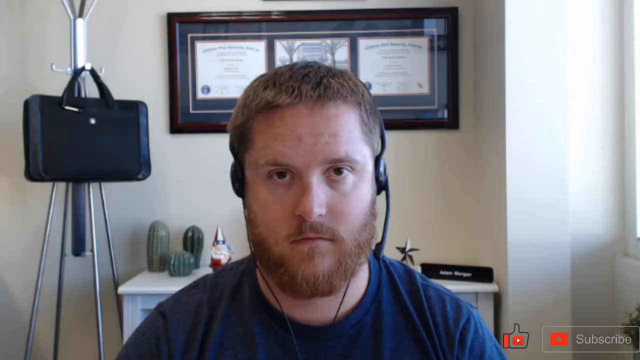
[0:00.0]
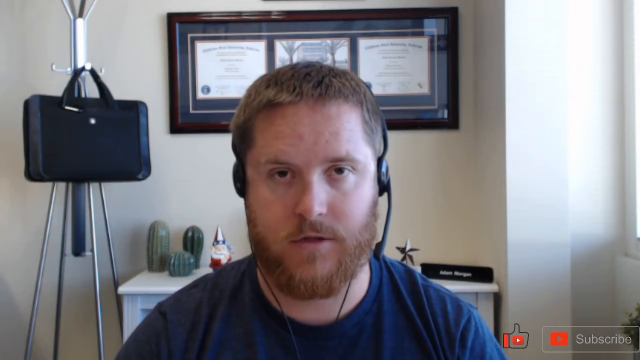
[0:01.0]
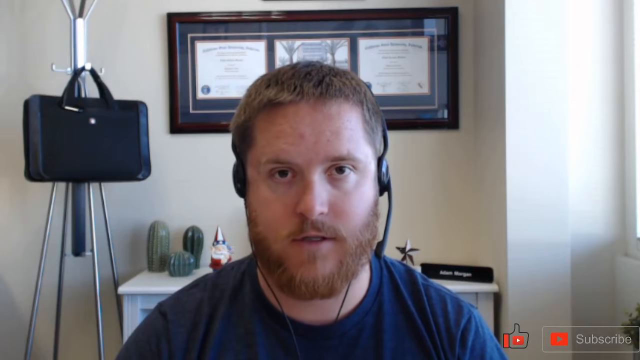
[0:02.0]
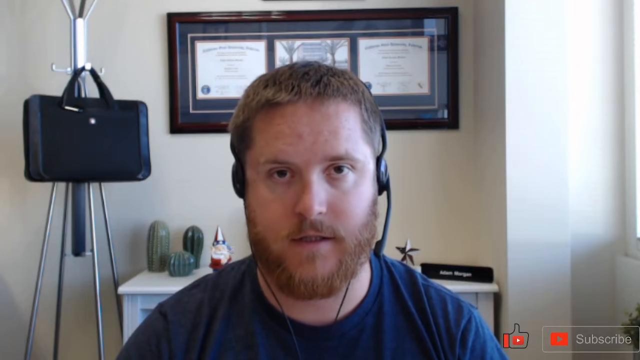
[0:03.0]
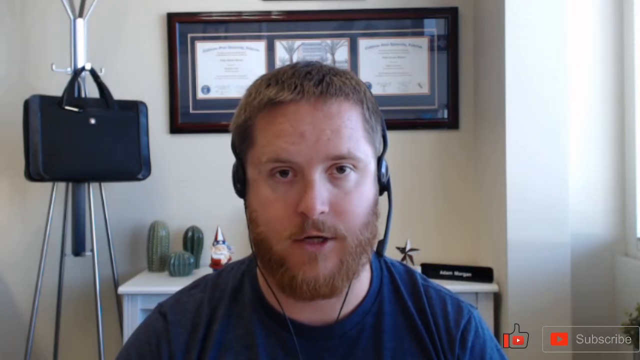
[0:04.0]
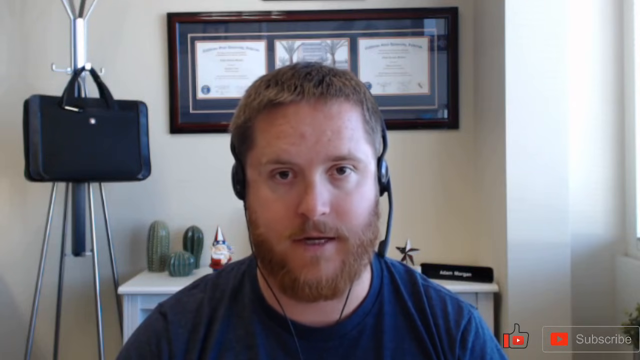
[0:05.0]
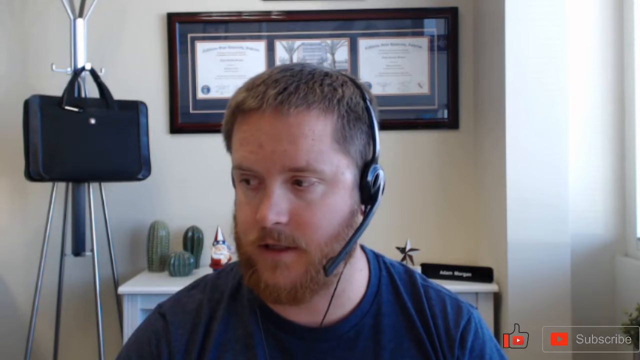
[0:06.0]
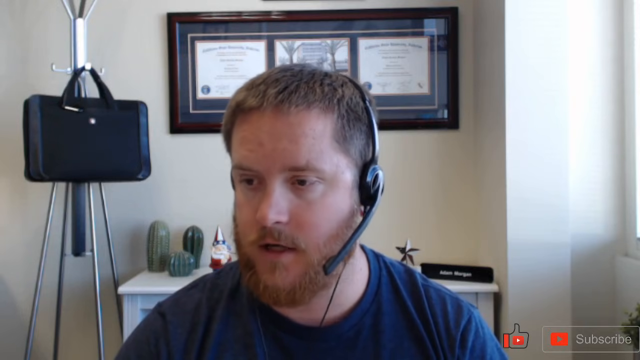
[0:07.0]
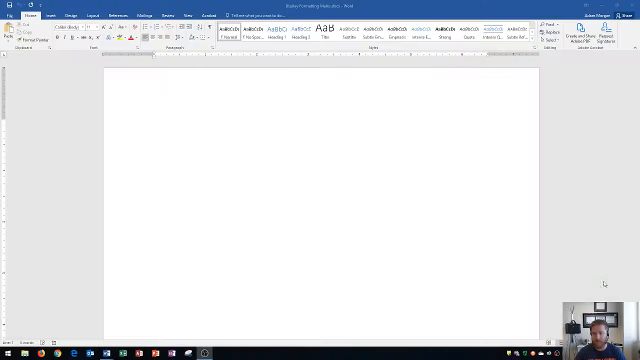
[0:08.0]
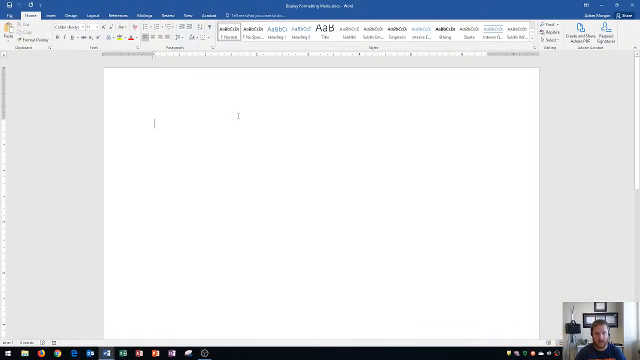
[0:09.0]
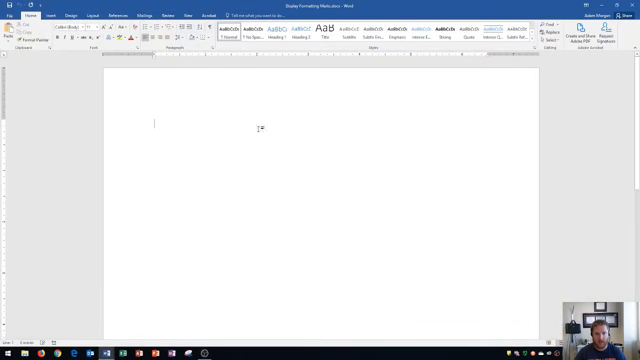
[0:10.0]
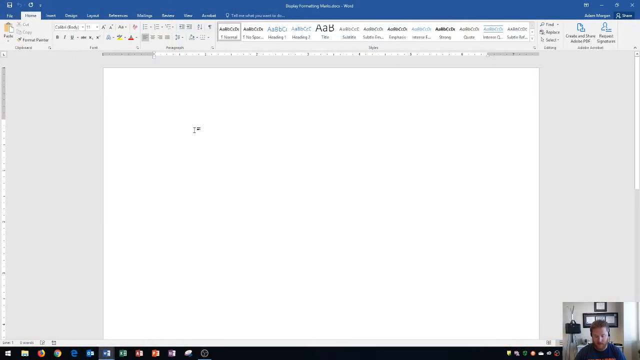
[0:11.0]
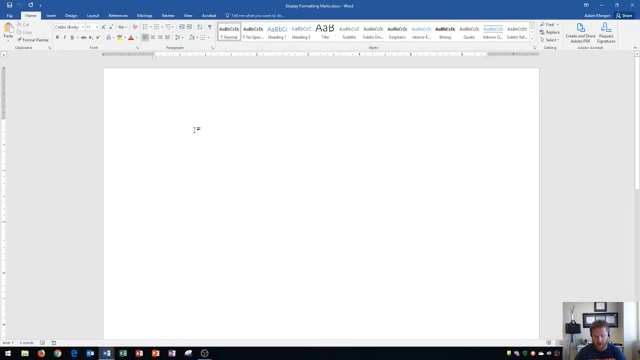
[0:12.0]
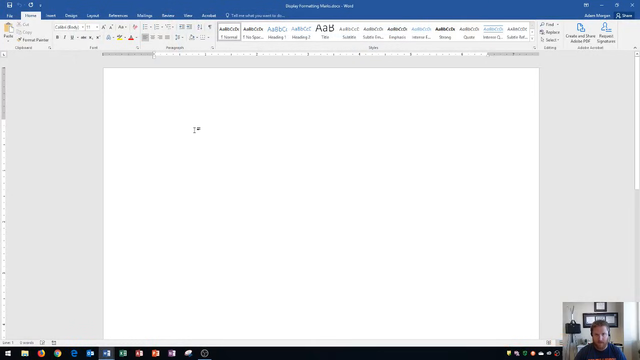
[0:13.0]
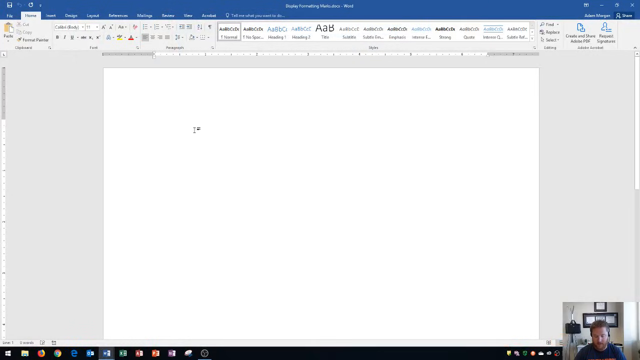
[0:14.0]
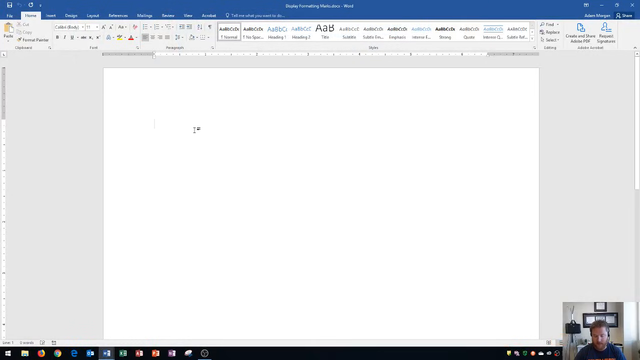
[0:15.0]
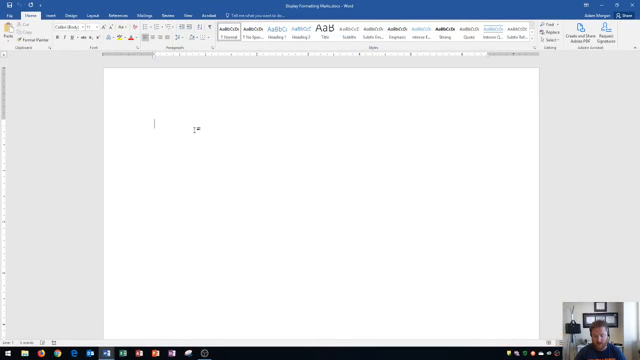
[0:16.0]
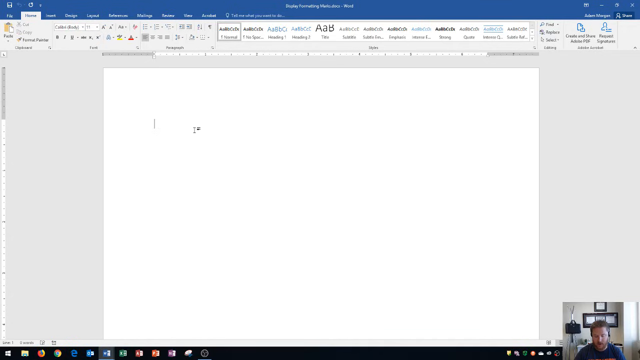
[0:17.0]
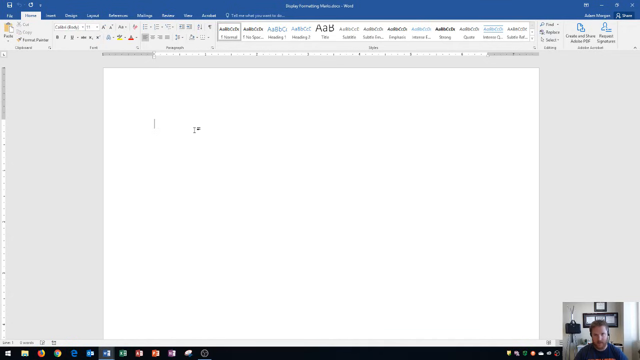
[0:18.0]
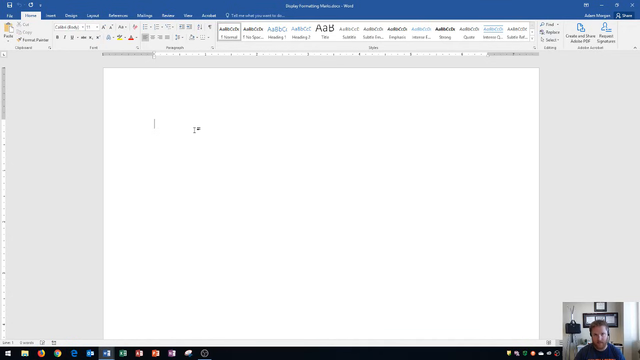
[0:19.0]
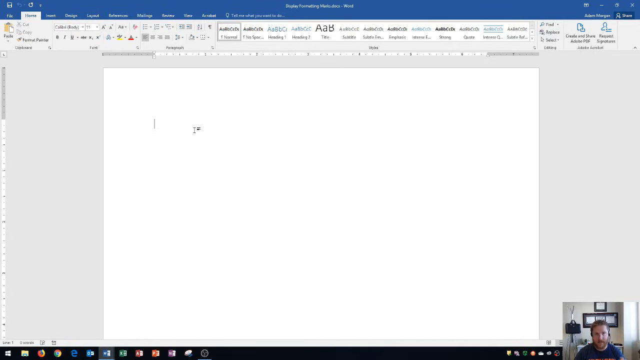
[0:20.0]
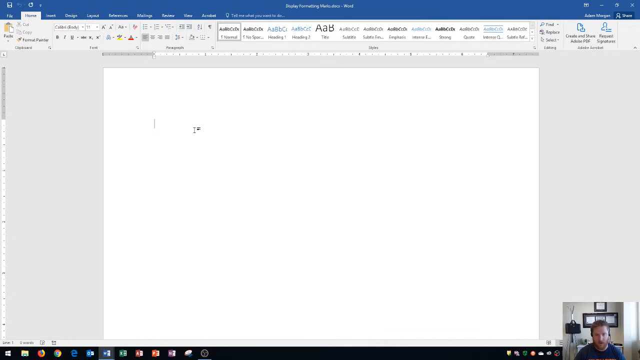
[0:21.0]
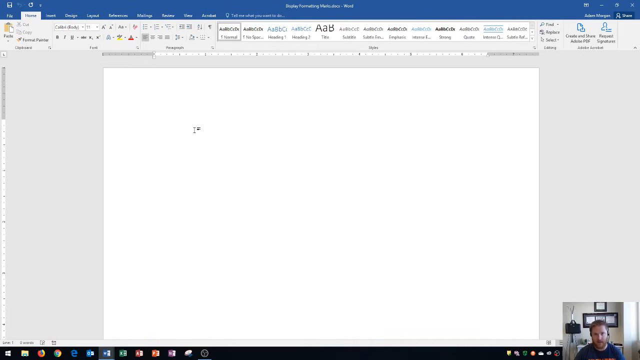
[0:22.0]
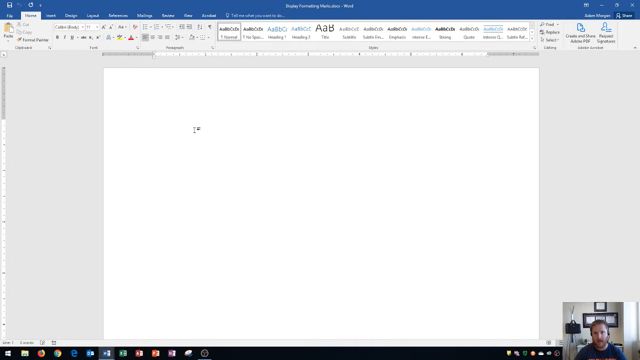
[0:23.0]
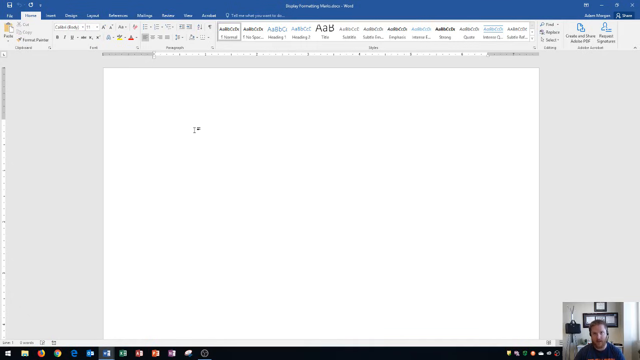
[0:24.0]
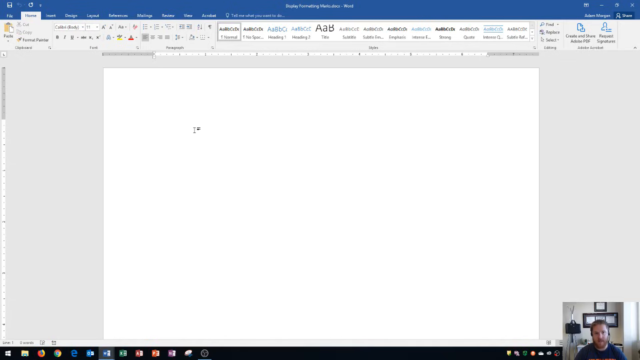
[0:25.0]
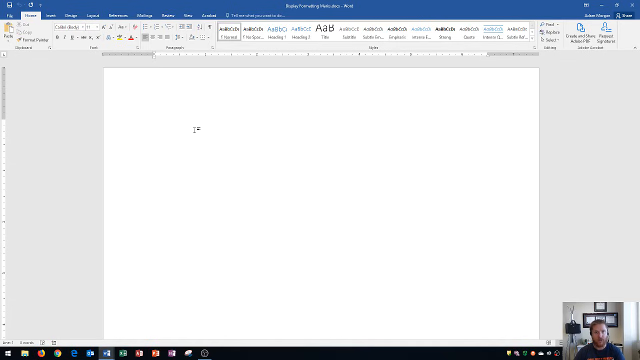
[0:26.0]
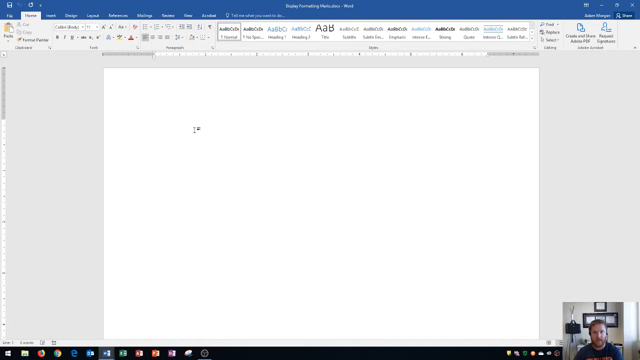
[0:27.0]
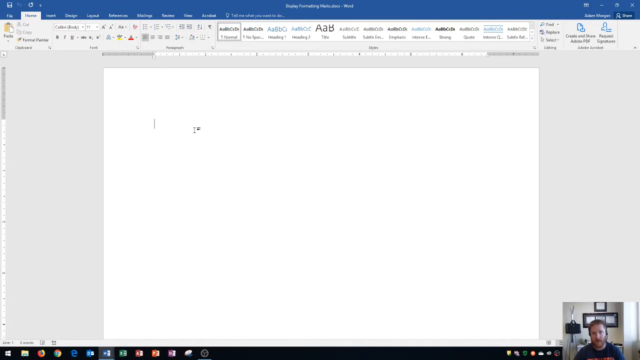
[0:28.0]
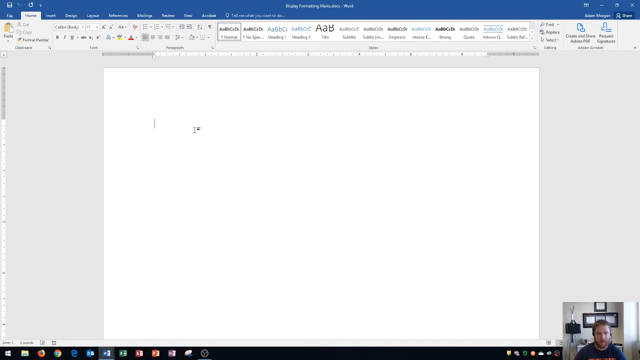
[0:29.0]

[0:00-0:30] A man is shown from the top of the chest up, seated and looking at the camera. He wears a headset on his ears that goes around the back of the top of his head, with a microphone at the side of his face at mouth level, and a navy blue t-shirt. His hair is light blonde, maybe reddish, short on top and apparently brushed down toward his face, and he has a mustache and beard. He sits in front of a frame on the wall that appears to hold a diploma on the left and on the right and a picture in the middle; the picture seems to show trees and a building, partly obscured by the top of his head. On the left is what looks like a metal coat rack with four legs, with a black rectangular bag or briefcase strapped onto one of its hooks. Behind him is a white dresser, of which only the left and right sides are visible because his body is in front of it. On the left of the dresser are three cacti: one tall, one short and round, and another tall one. Next to them is a Santa Claus figurine that appears to have a triangular gold hat. On the right is a star, apparently a bronze starfish or pinwheel, and something rectangular and black. The man talks directly to the camera, then looks toward the viewer's left, tilting his head slightly to that side and looking downward at an angle while still speaking, his eyes shifting left and right. The screen then changes to what looks like Microsoft Word, with the video of the man shown small in the bottom right corner. The mouse moves in a circle toward the top of the screen, over a blank page ready to be typed on. In the small box the man keeps speaking to the camera, shifting his body slightly left and right. His fingers briefly come into view, as if he raised his arm to make a point, then disappear off screen.